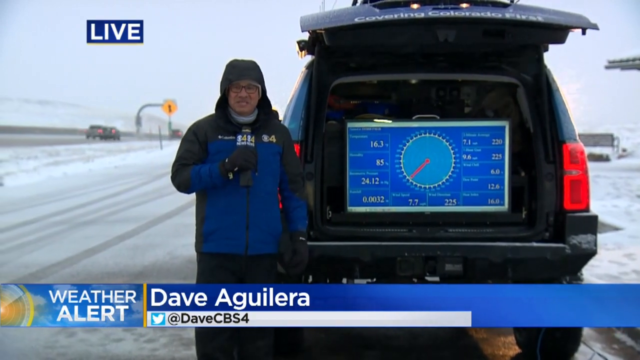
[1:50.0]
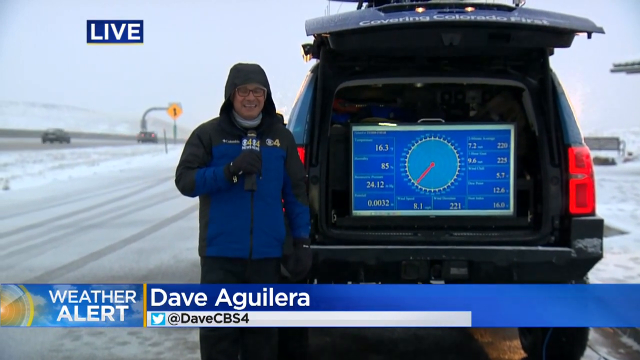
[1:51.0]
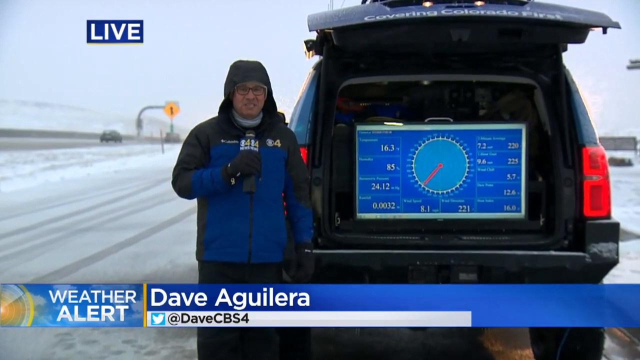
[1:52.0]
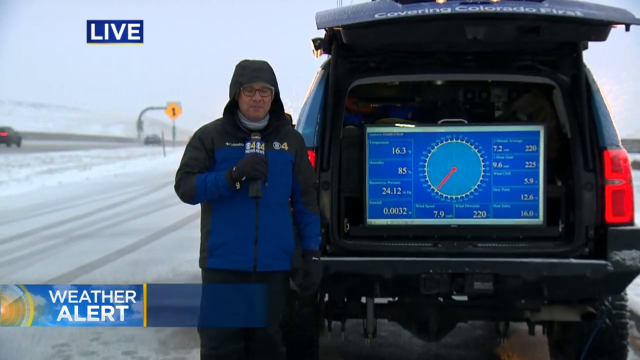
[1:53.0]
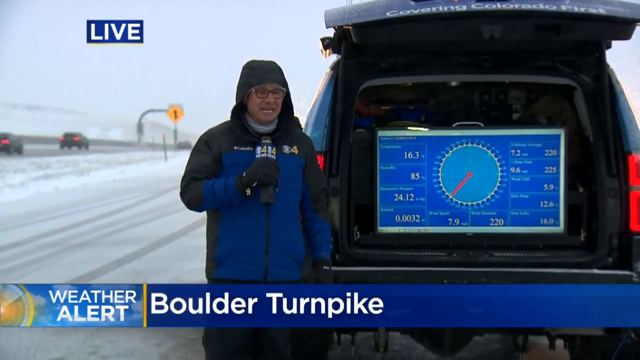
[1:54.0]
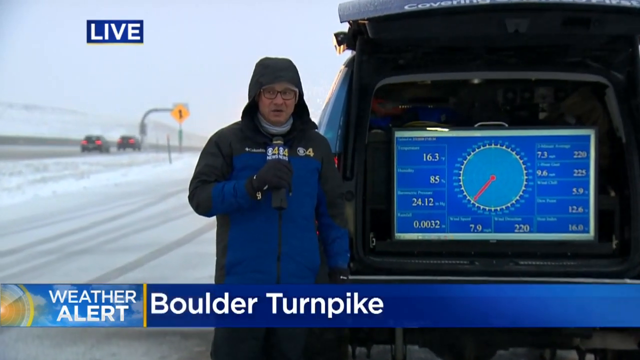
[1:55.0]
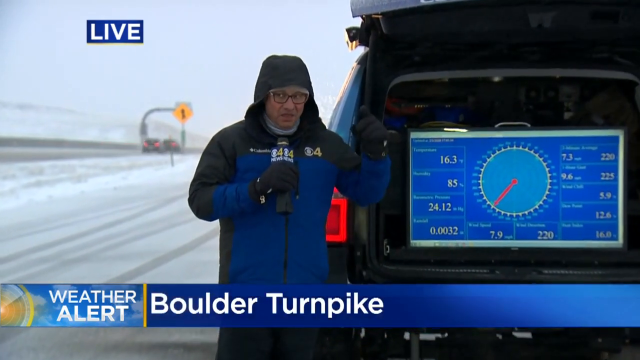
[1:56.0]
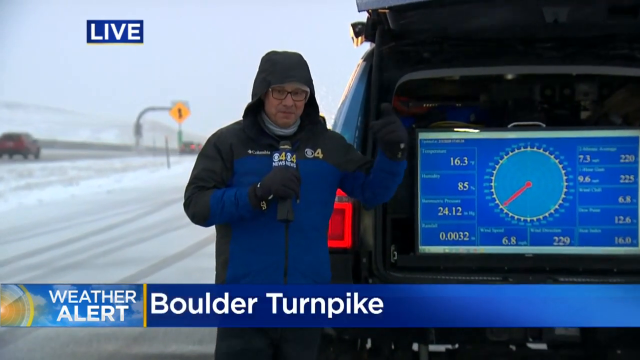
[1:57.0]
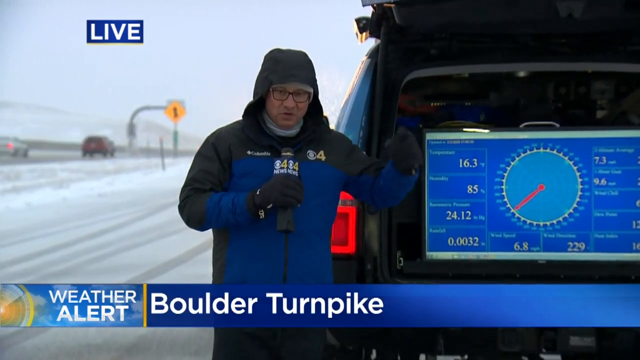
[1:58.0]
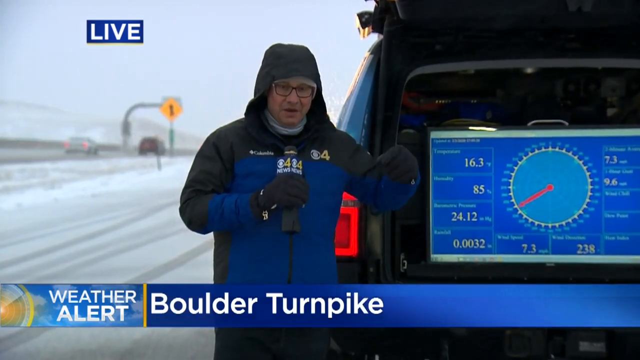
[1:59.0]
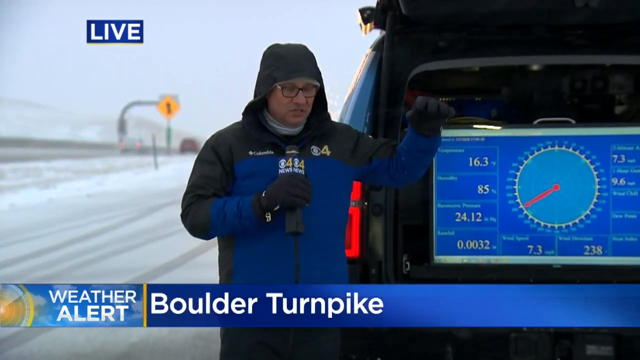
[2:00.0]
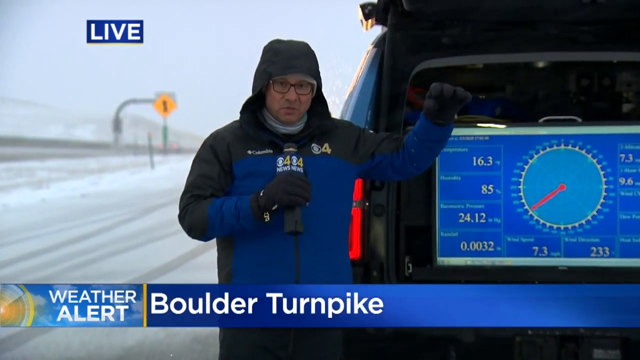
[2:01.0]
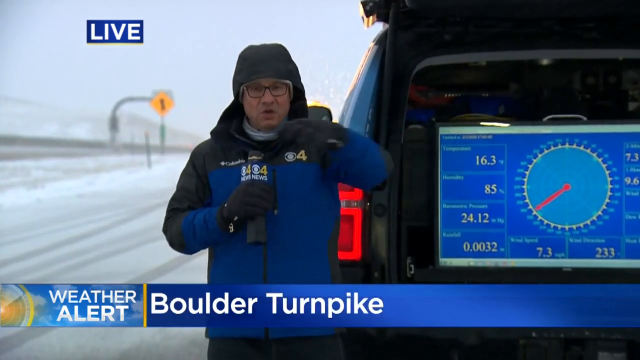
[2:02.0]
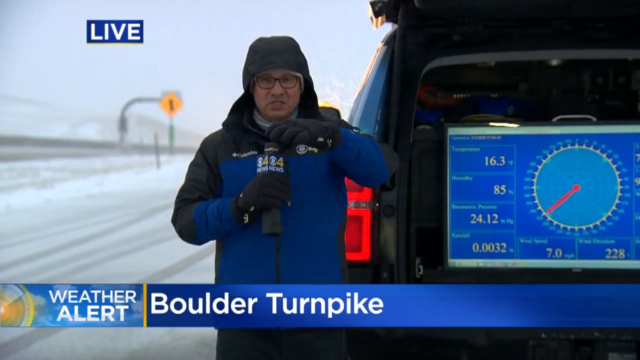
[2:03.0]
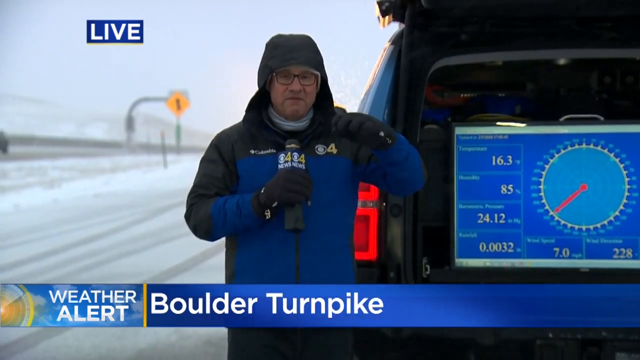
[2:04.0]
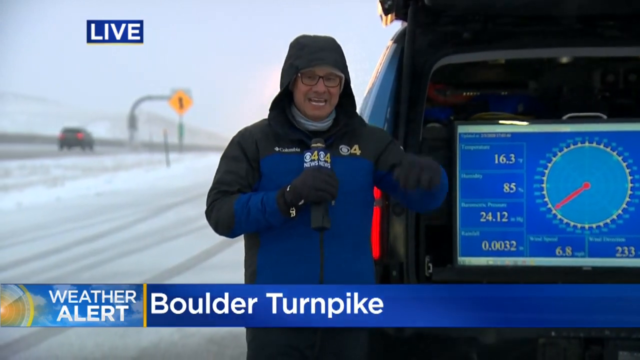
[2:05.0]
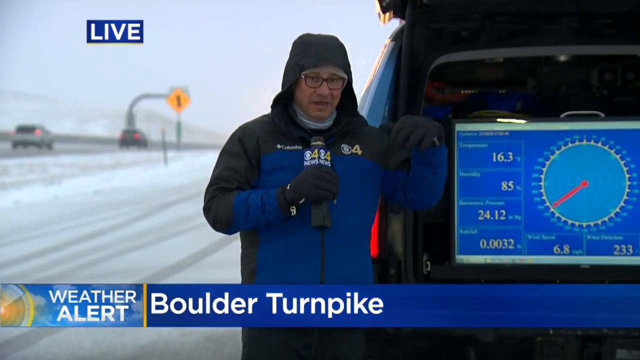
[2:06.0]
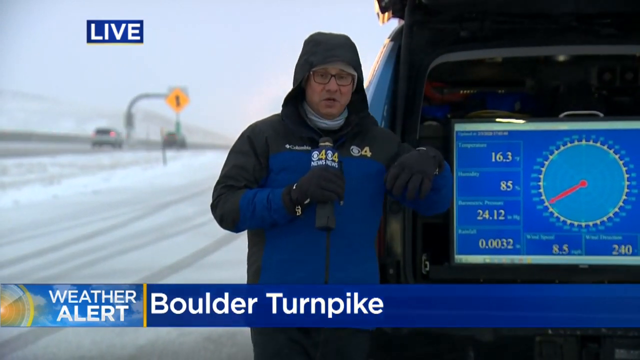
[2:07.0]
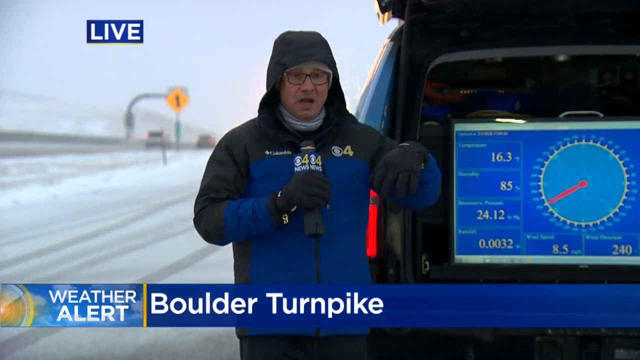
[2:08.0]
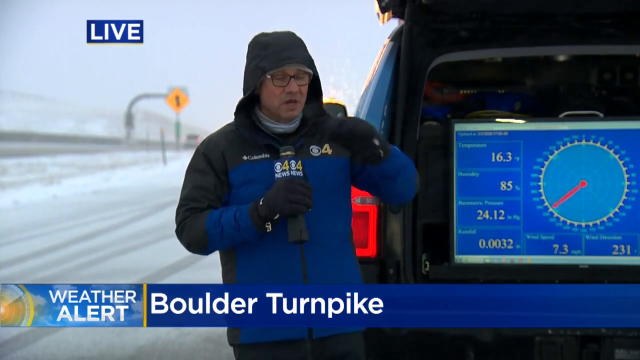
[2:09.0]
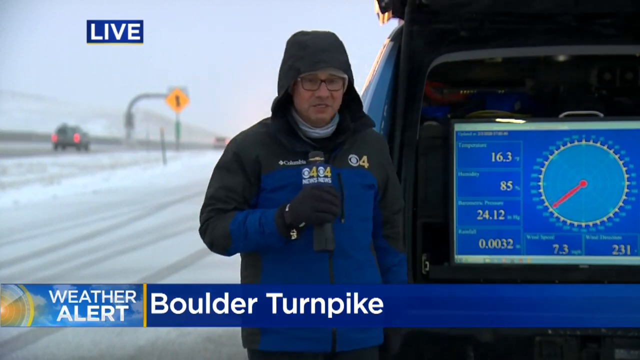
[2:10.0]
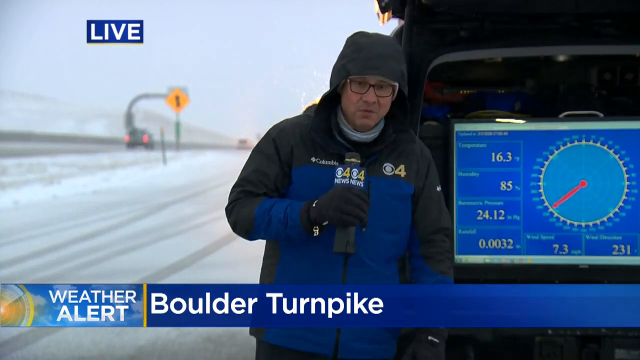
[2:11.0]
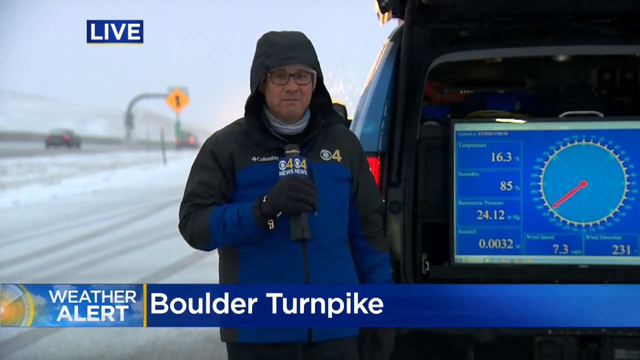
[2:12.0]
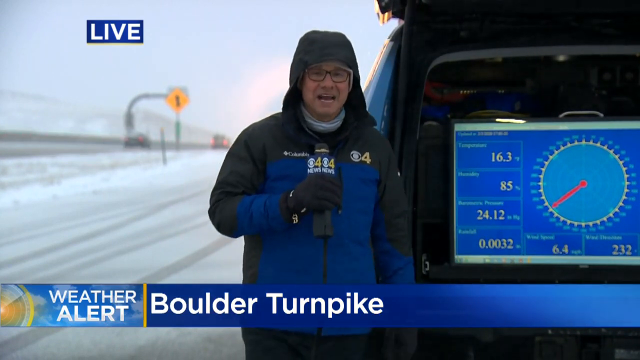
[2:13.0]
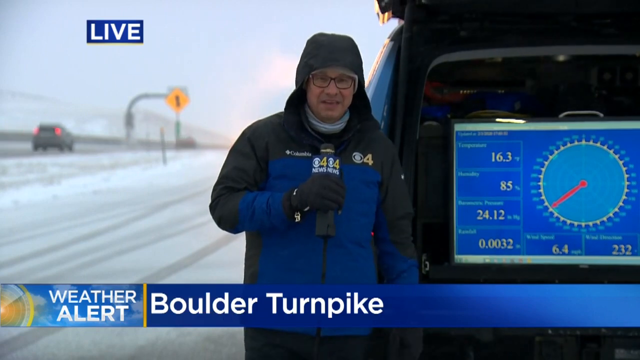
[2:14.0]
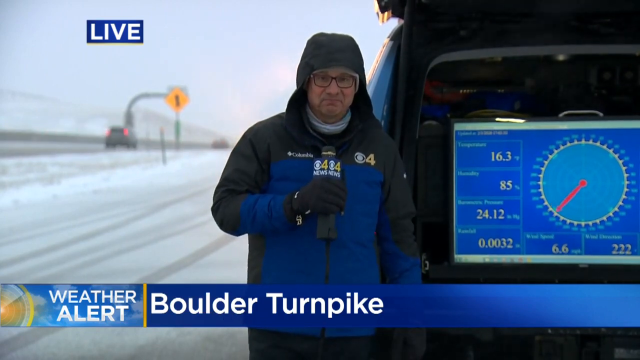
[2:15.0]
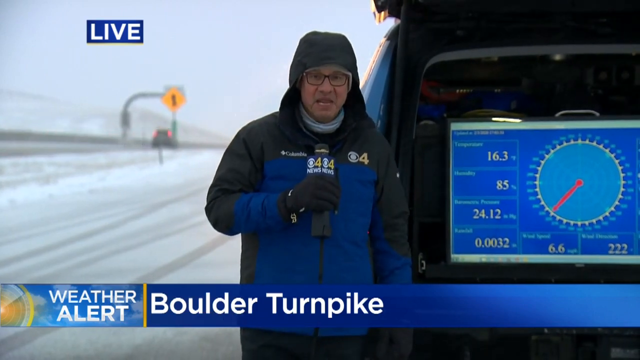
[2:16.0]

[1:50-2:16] A weatherman stands at the back of a weather van with the trunk open. A monitor there shows weather information, including a temperature of 16 degrees and a wind chill of 6.8. "Live" appears at the top, and the weatherman's name, "David Aguilera", appears at the bottom, along with "at Dave CBS4" and "Boulder Turnpike". He wears a Columbia jacket with blue on the front, black sleeves and a black hood, which is up, plus black gloves, black pants and glasses. He talks into the microphone, moving his hands as he talks to the screen and the viewers. Cars go by in the background on the other side of the street, a lot of snow is on the ground, and the sky is kind of white.